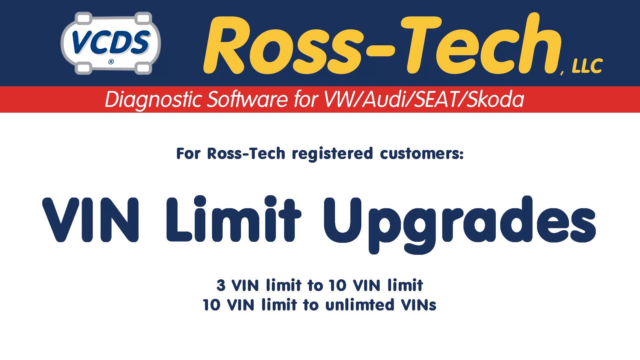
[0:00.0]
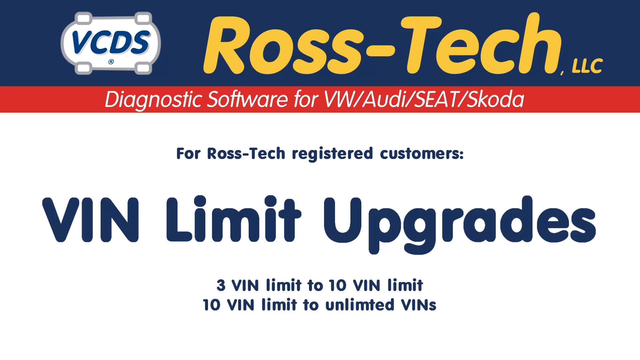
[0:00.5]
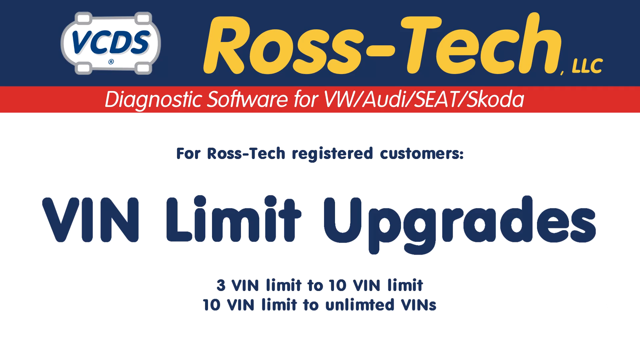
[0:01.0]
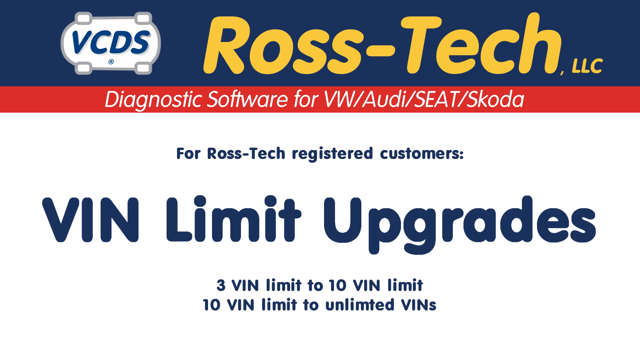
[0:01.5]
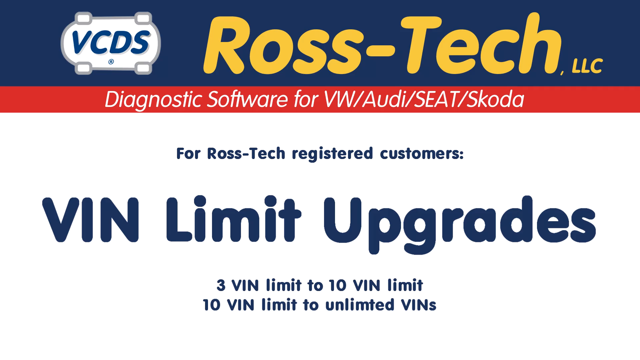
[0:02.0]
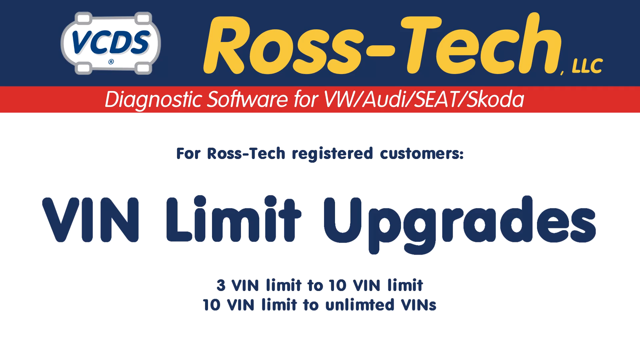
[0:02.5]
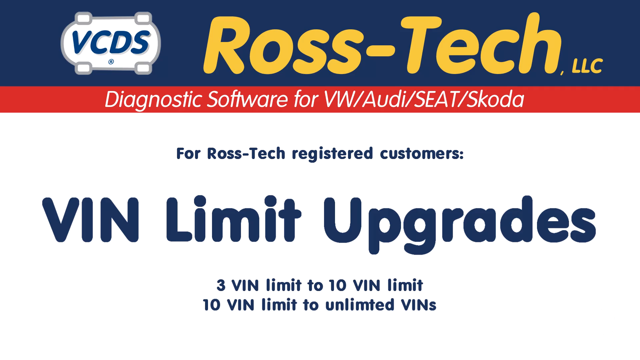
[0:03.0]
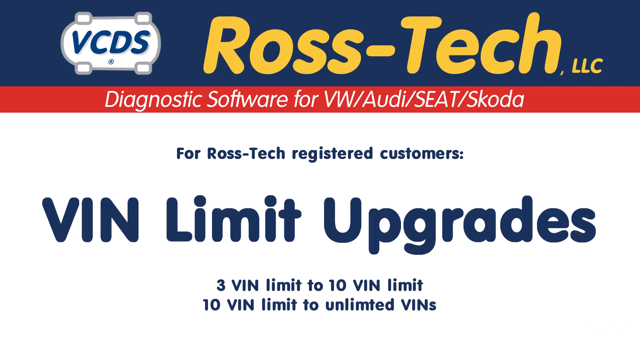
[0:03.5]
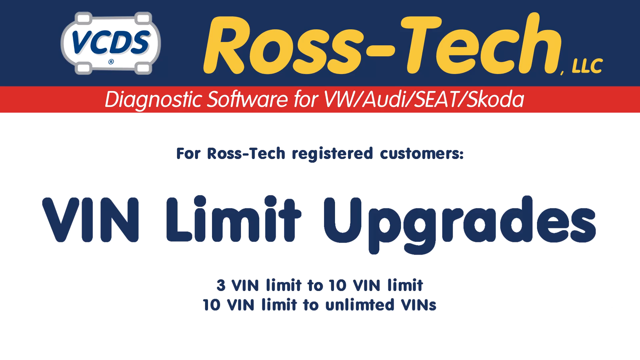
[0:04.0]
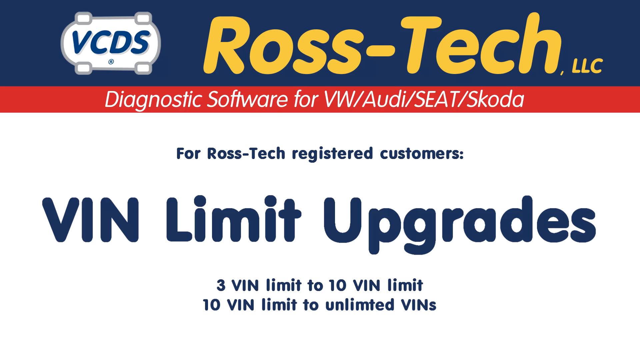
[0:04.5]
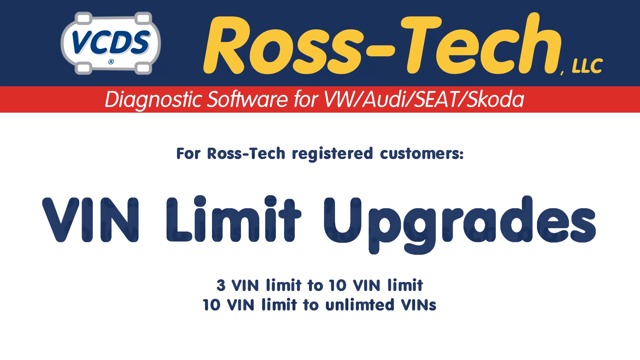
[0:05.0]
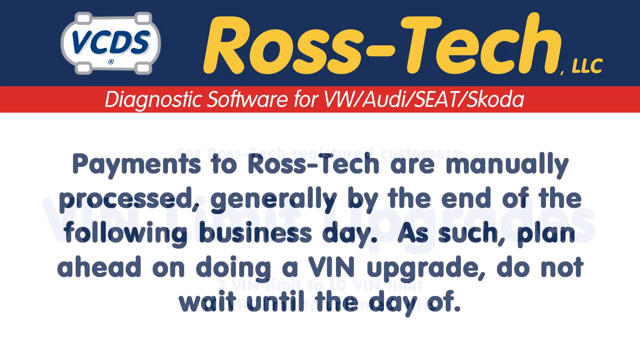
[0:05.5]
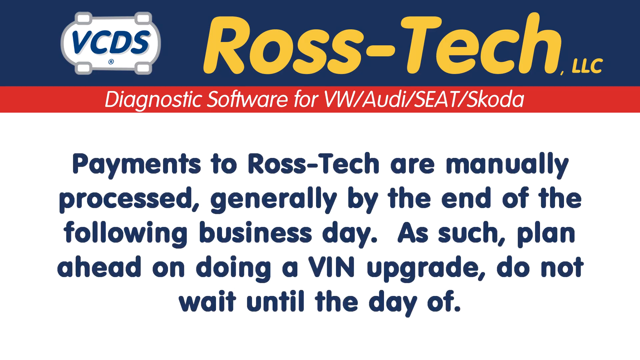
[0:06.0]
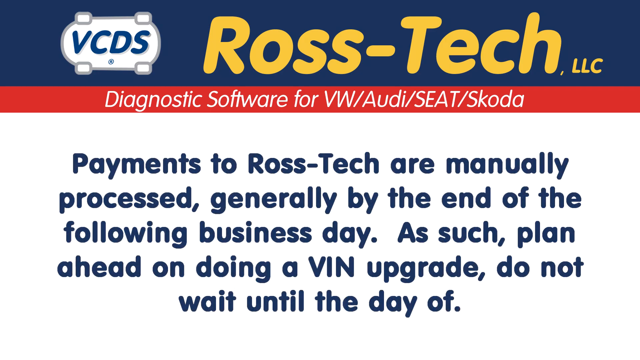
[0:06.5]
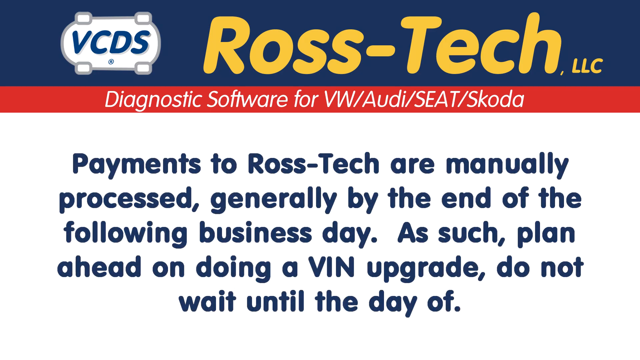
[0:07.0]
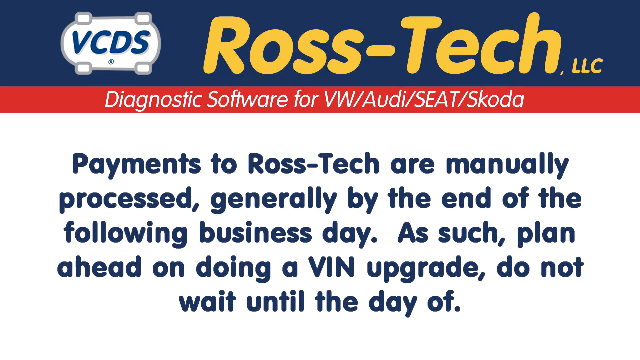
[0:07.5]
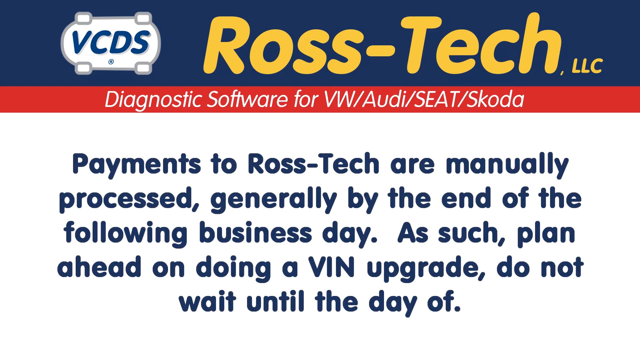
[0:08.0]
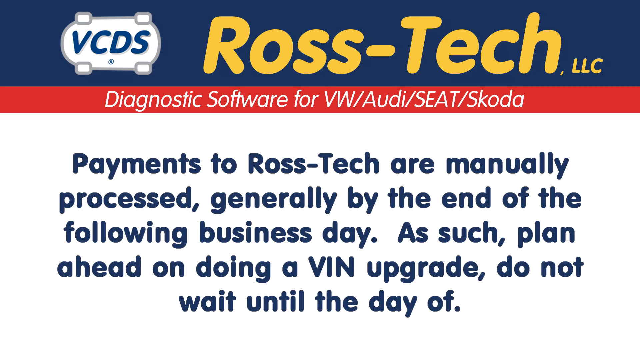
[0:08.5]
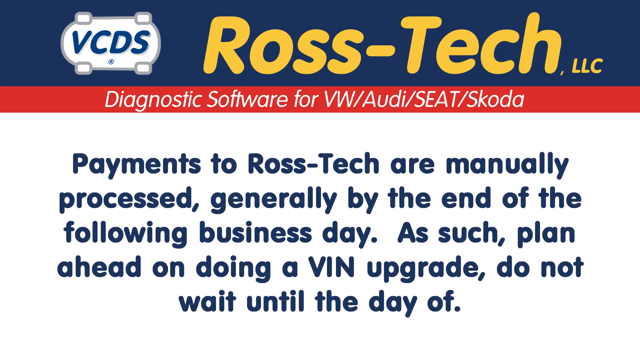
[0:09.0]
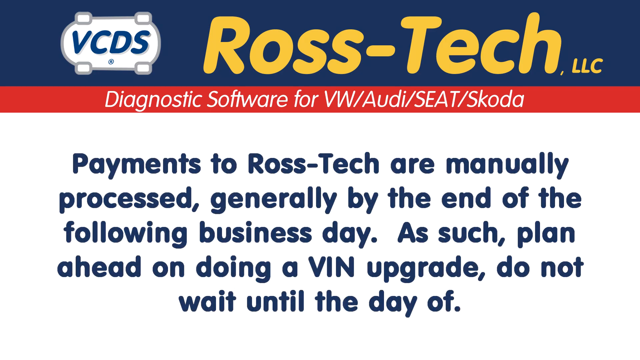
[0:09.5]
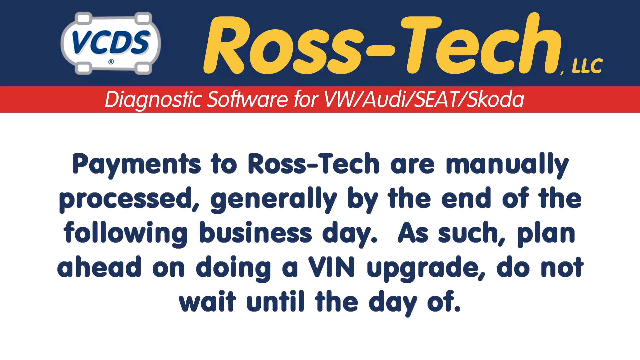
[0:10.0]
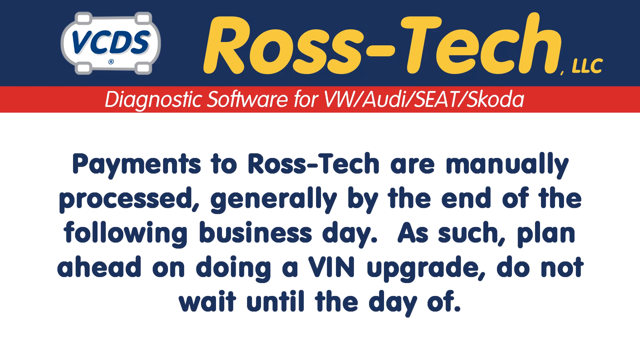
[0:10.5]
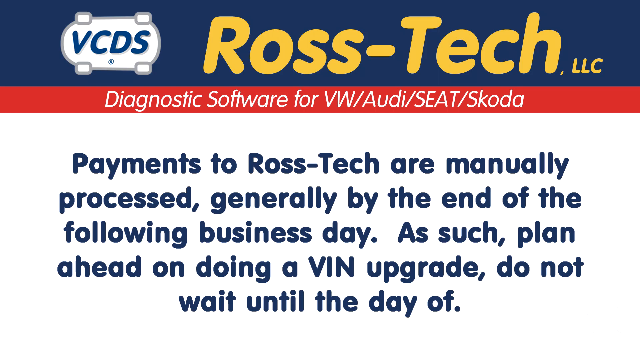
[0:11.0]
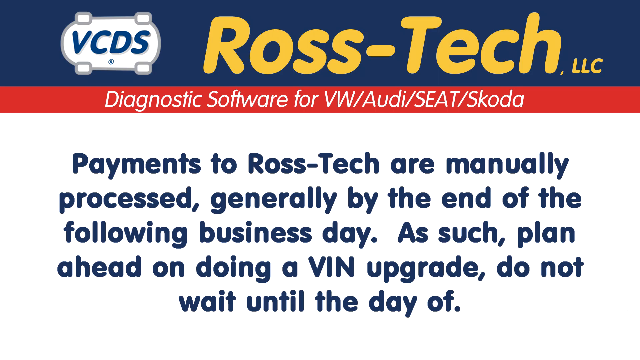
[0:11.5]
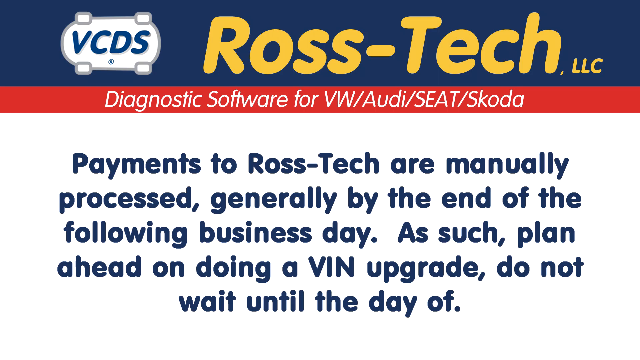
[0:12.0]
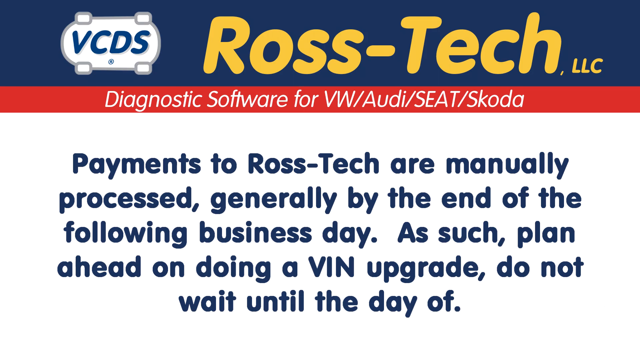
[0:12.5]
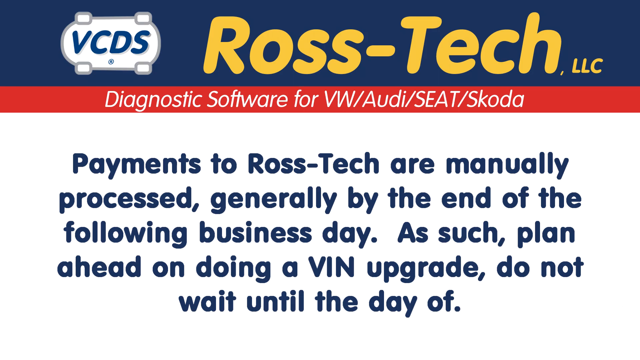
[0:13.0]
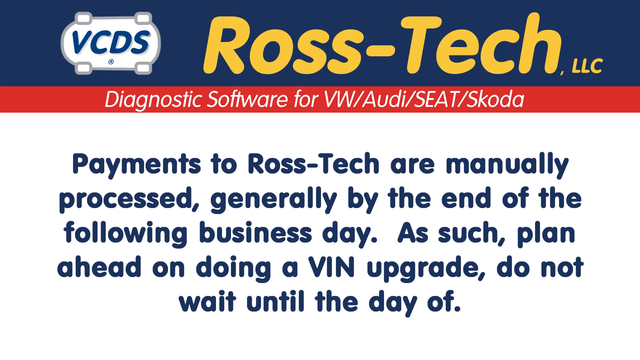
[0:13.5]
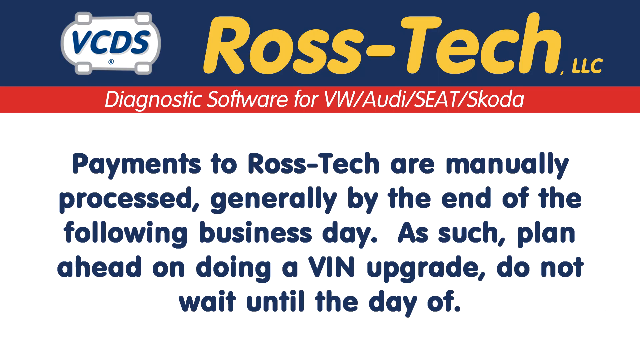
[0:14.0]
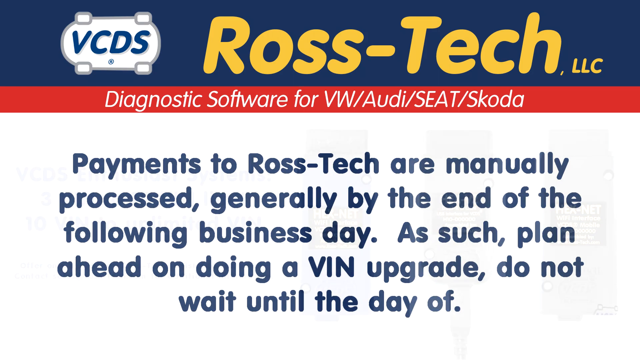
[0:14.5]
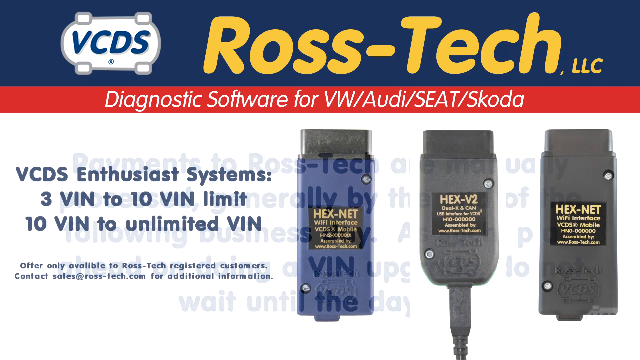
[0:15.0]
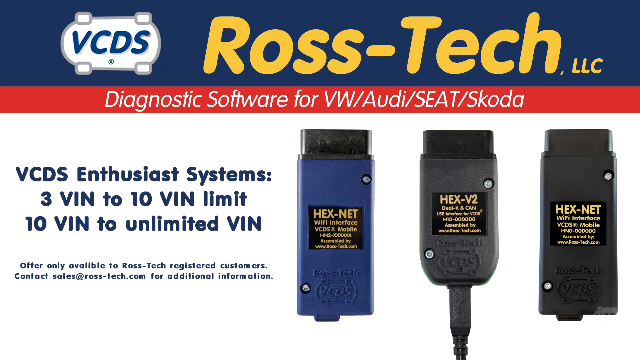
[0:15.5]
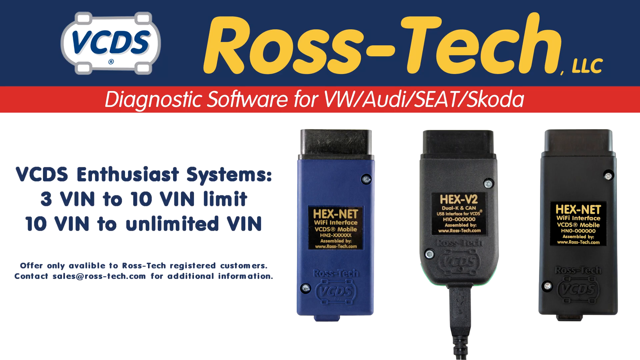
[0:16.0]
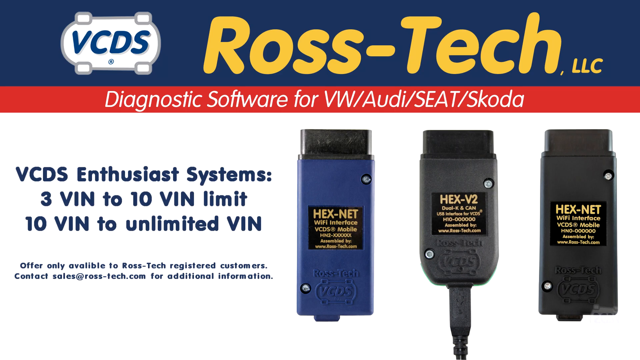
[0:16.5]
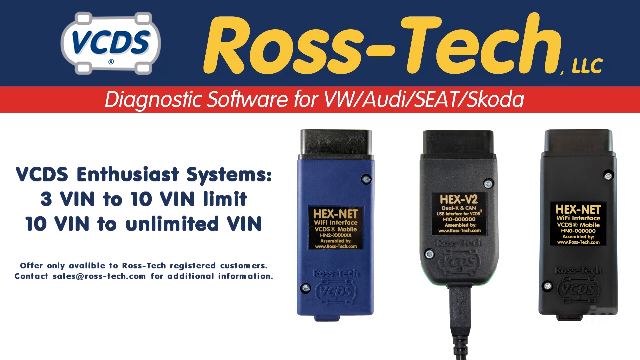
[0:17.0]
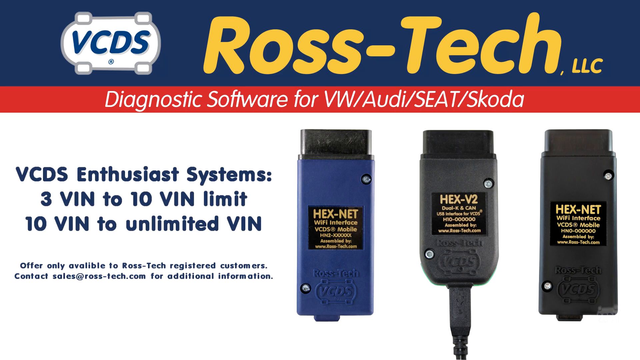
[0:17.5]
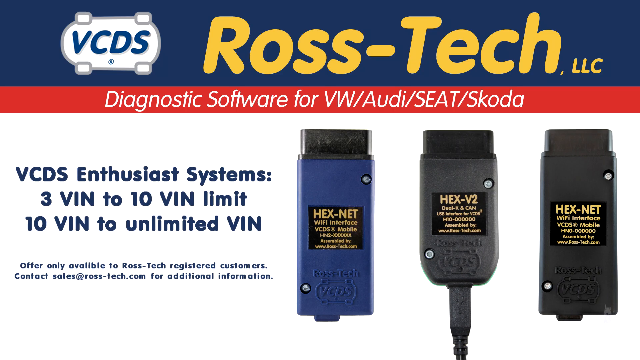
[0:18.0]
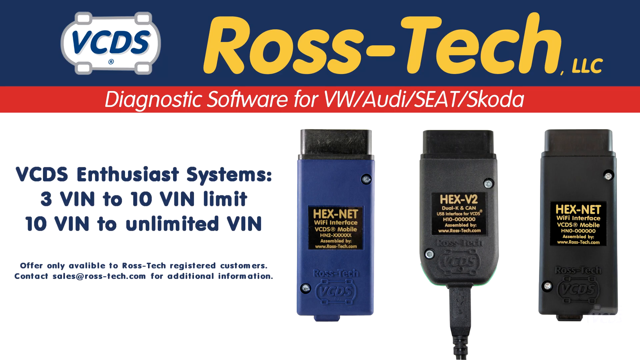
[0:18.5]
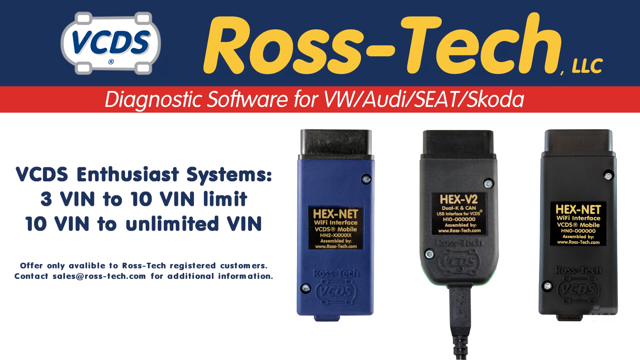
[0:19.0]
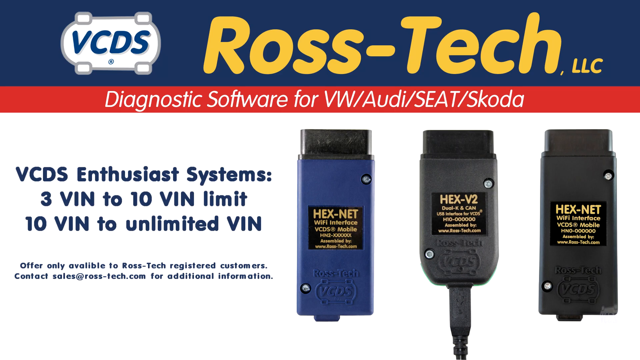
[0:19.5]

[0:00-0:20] The opening looks almost like a business card. A dark blue banner across the top carries bright yellow text reading "Ross Tech LLC." In the upper left corner is a somewhat oblong white shape with the letters "VCDS" in bold dark blue, and below it a thin red banner with white text reading "Diagnostic Software for VW/Audi/Seat/Skoda." The white area below that has blue text reading "for Ross Tech Registered Customers VIN Limit Upgrades, 3 VIN limit to 10 VIN limit," and below that, in much smaller text, "10 VIN limit to unlimited VINs." The area below the red banner then changes to different text: "Payments to Ross Tech are manually processed, generally by the end of the following business day. As such, plan ahead on doing a VIN upgrade. Do not wait until the day of." That area then switches to a white background showing three small plugs of some sort. From left to right there is a blue rectangular one that looks like a charger or the end of a charger, labeled "HEXNET"; a black one labeled "HEXB2"; and another black rectangular one labeled "HEXNET," all in yellow text.